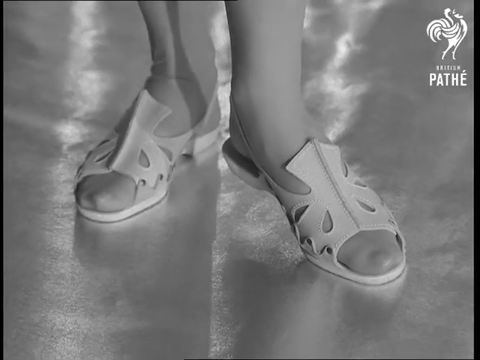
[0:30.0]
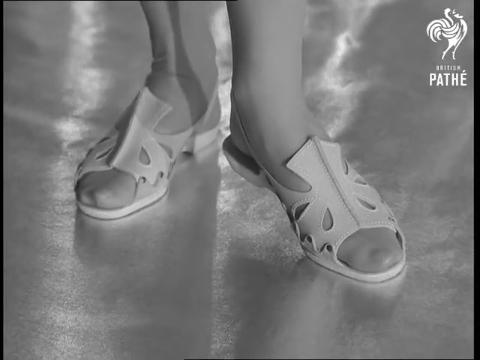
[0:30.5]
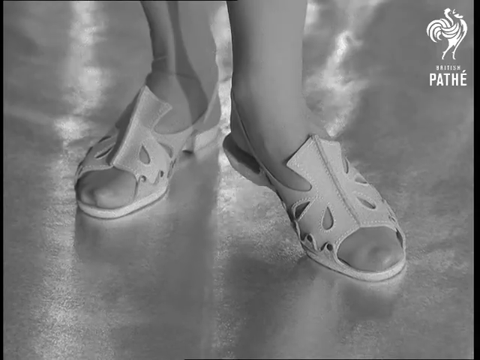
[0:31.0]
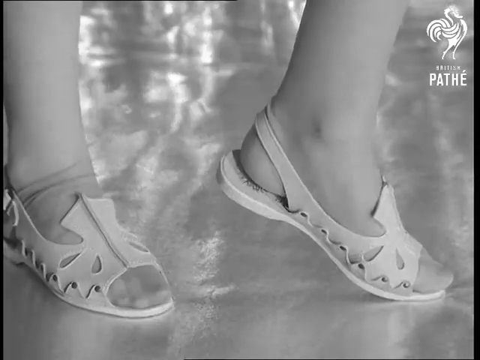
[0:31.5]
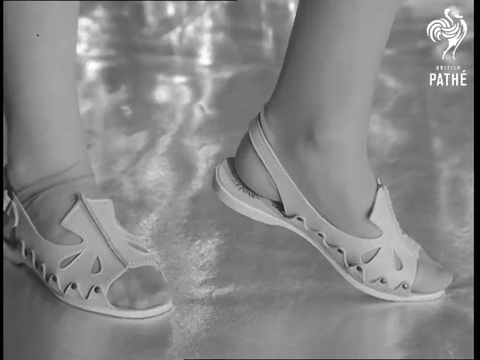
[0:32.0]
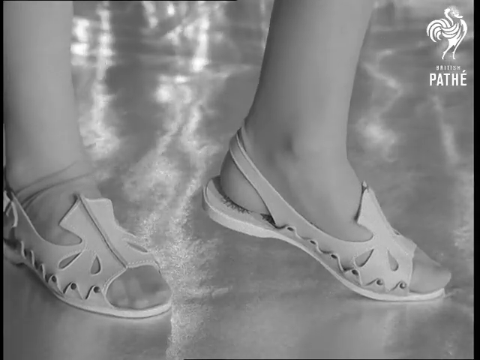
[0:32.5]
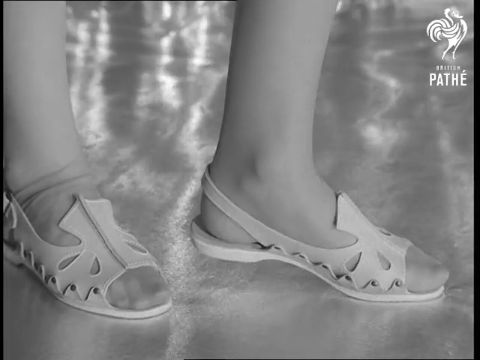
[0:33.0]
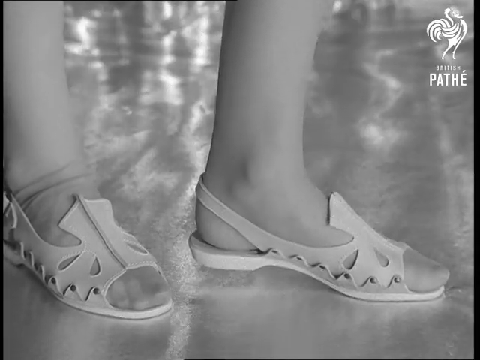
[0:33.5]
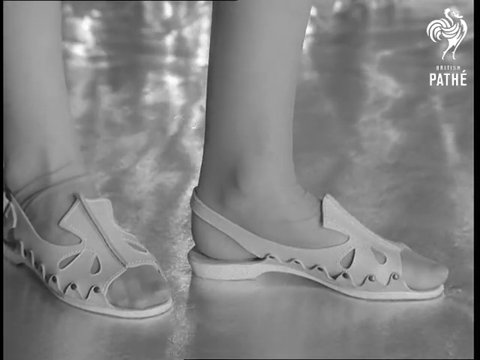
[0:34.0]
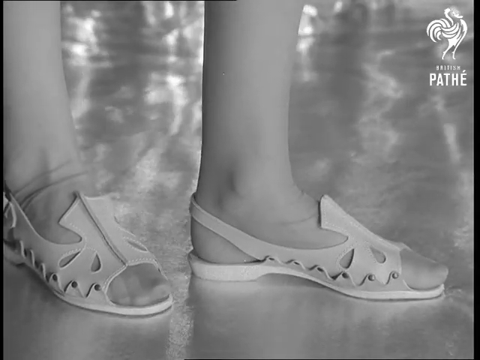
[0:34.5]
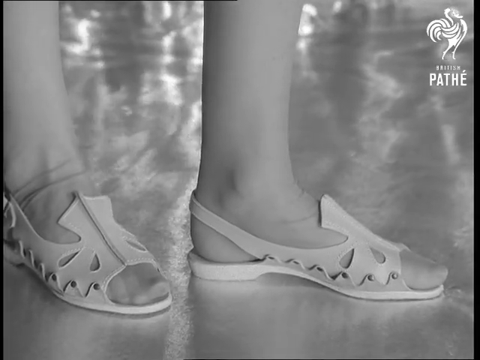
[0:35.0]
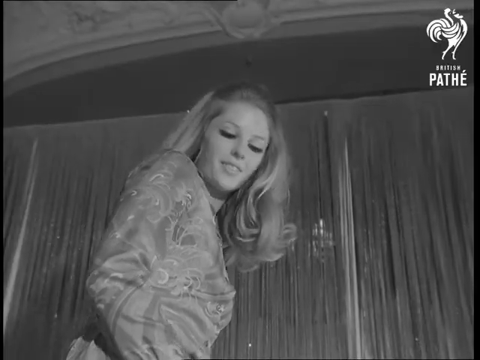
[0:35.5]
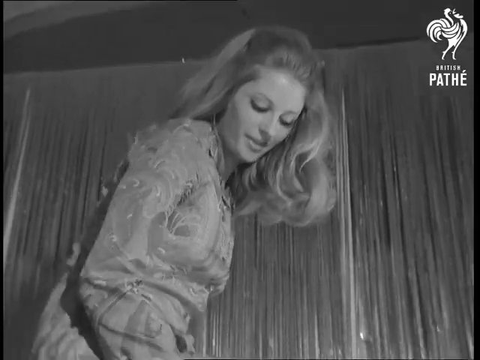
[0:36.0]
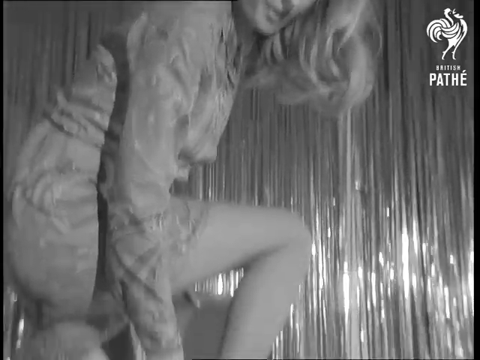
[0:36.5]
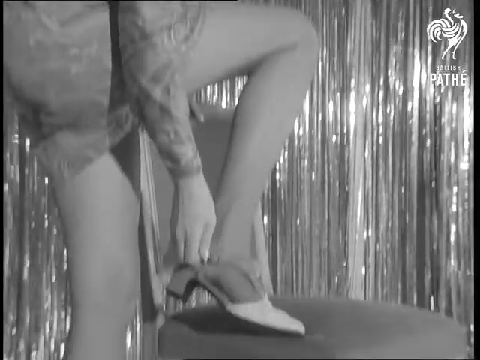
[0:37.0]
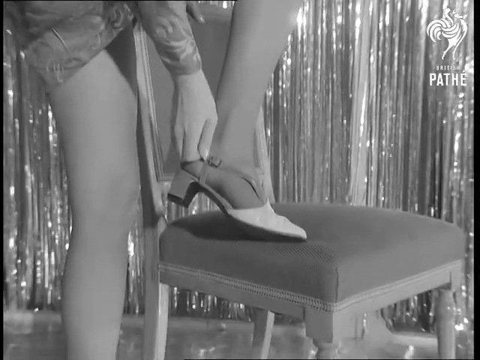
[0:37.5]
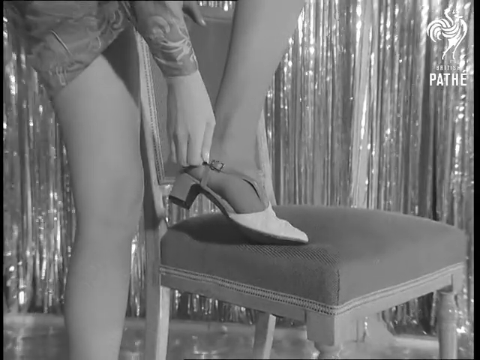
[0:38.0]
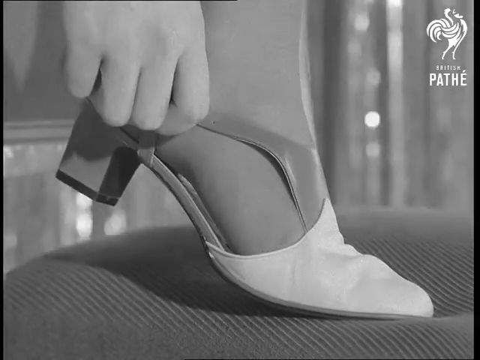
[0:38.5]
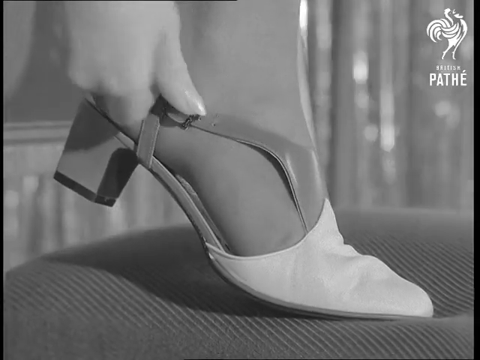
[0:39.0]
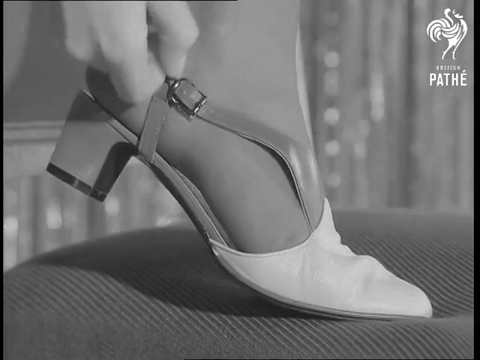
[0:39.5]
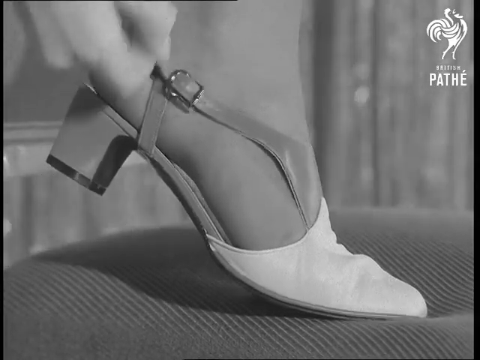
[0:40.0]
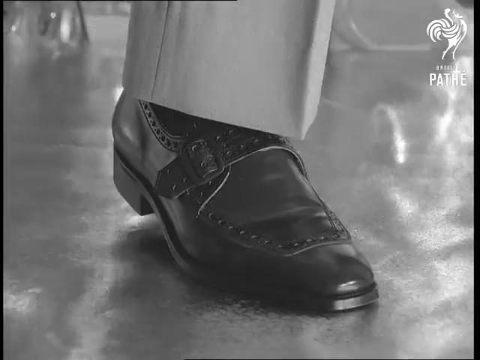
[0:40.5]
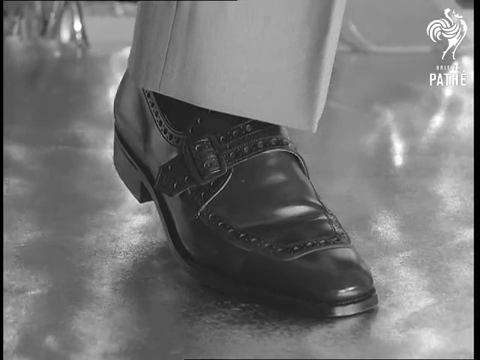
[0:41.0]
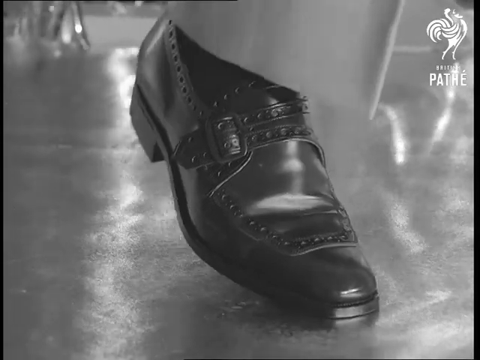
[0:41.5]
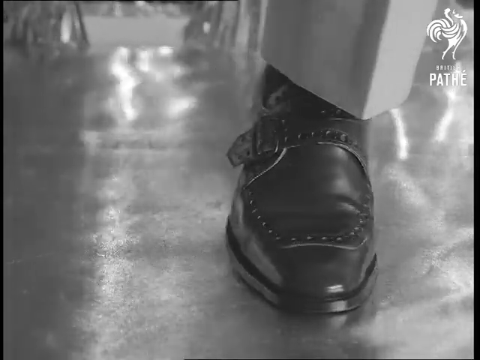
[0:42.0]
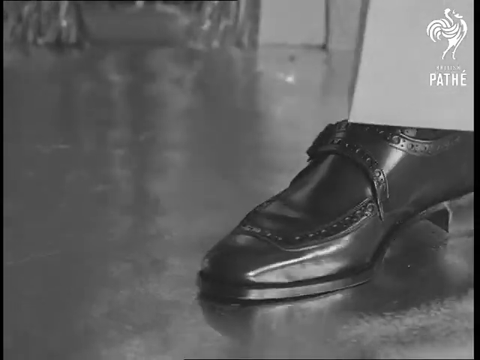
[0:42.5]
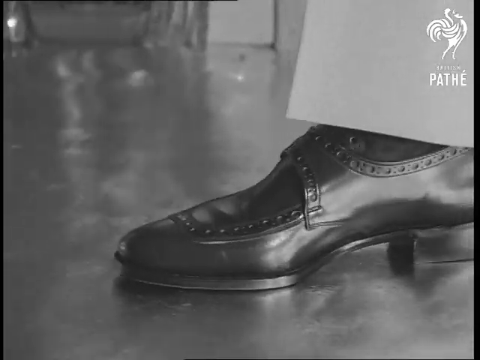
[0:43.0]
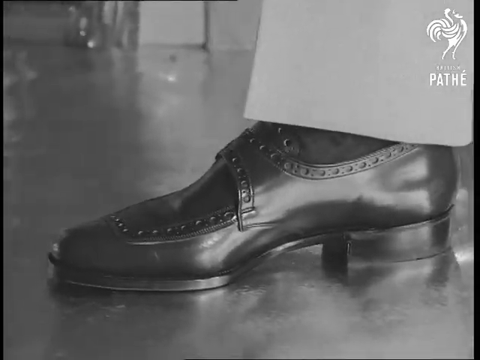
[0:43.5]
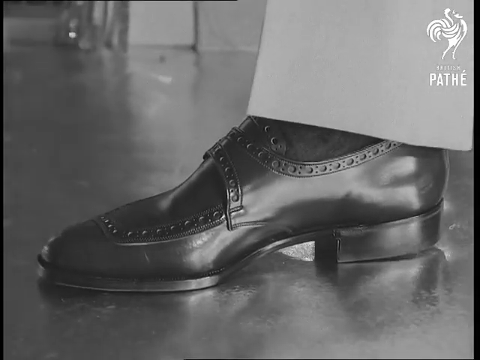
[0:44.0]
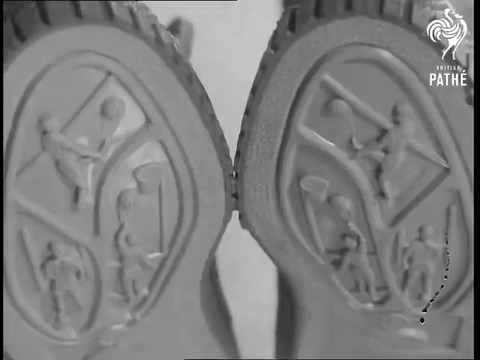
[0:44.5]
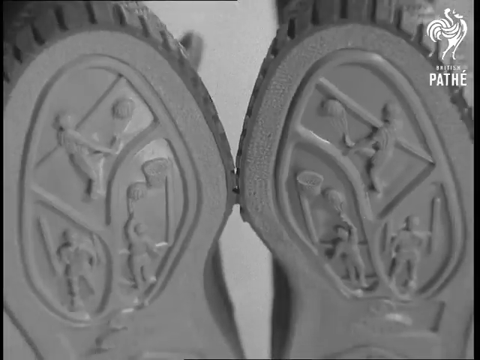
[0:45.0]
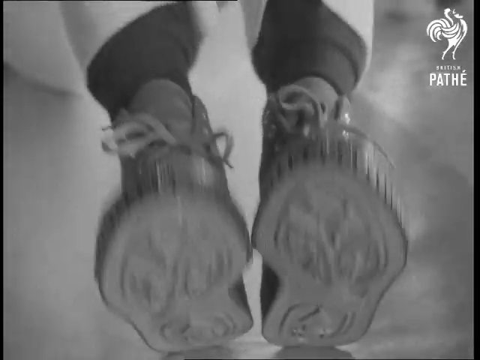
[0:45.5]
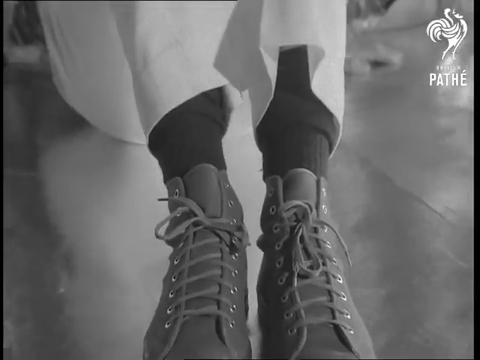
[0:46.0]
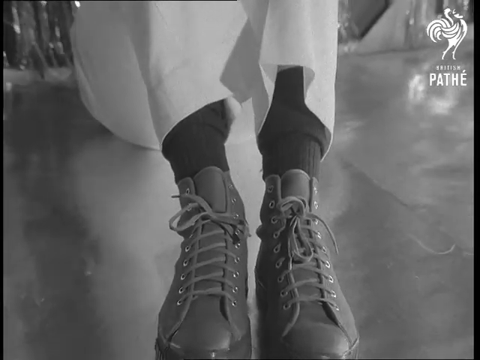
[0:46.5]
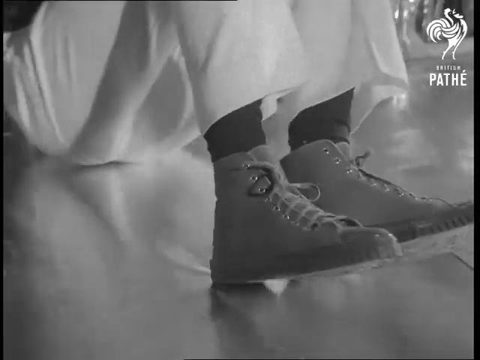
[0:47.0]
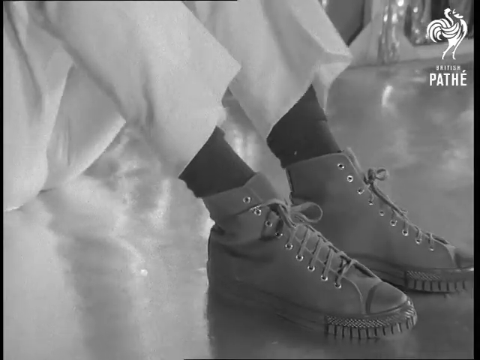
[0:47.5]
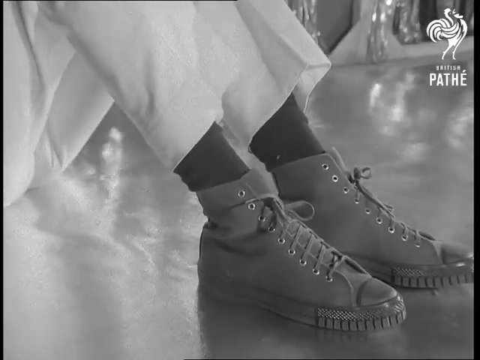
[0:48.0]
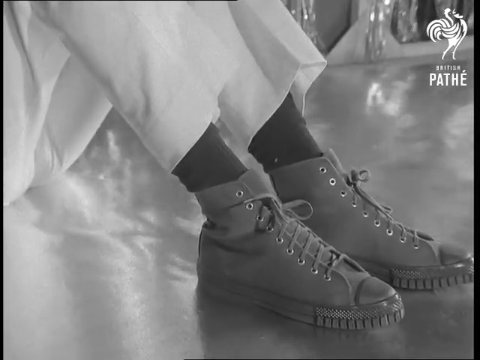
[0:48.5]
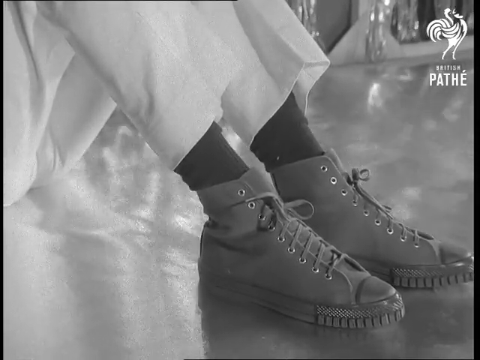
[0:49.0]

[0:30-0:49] A model wears another pair of shoes, flat shoes that look simple. A men's shoe is also shown: boots with a design and a logo written on them, and a design underneath.